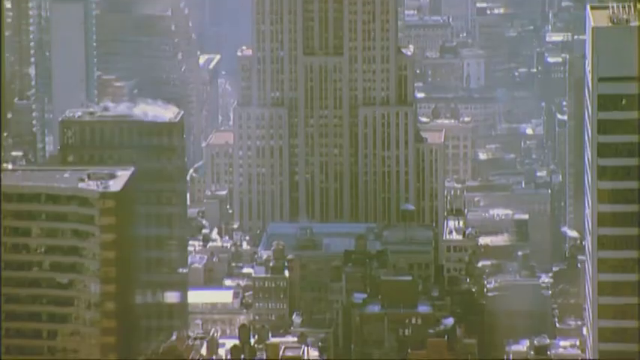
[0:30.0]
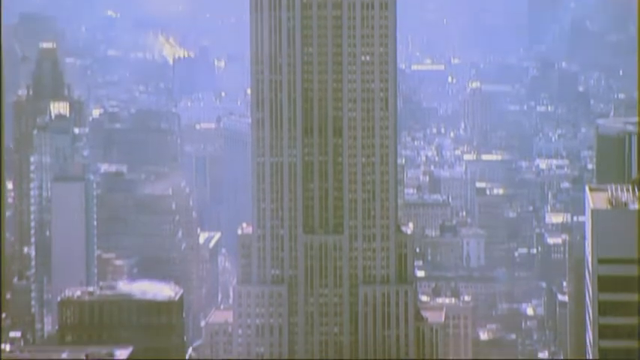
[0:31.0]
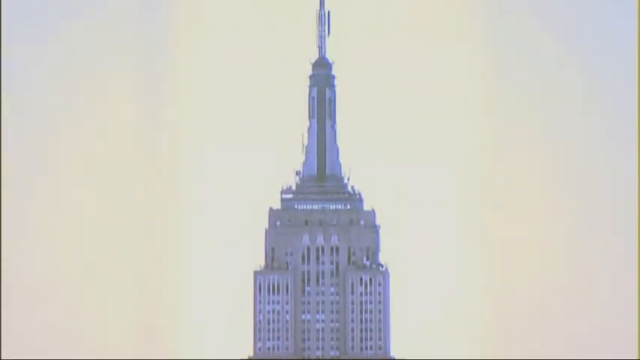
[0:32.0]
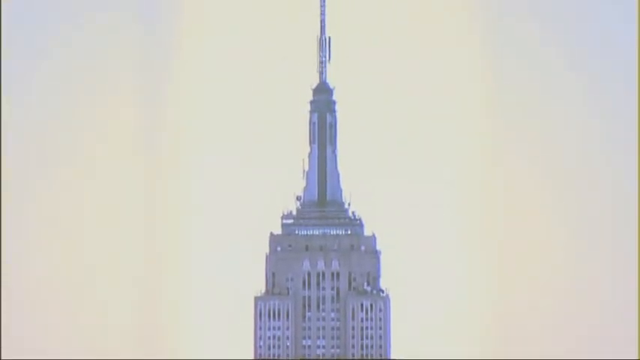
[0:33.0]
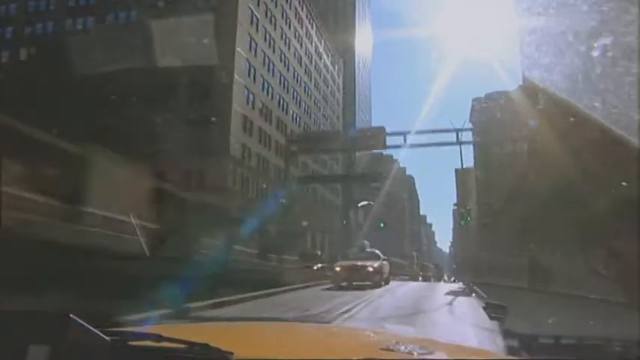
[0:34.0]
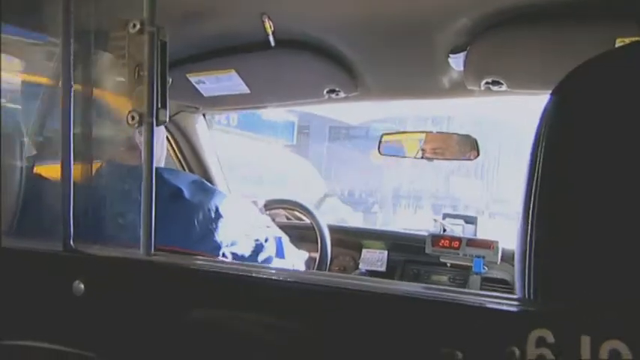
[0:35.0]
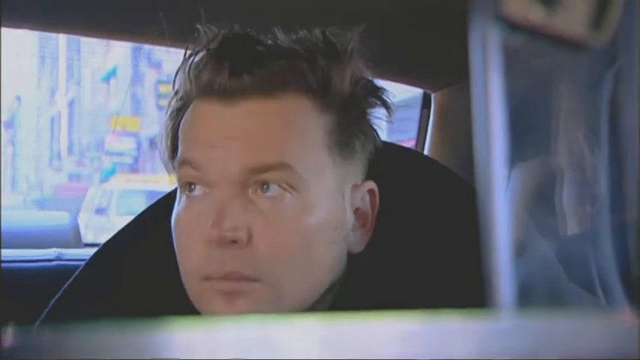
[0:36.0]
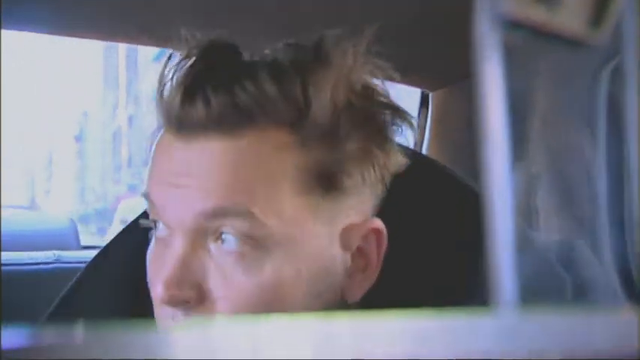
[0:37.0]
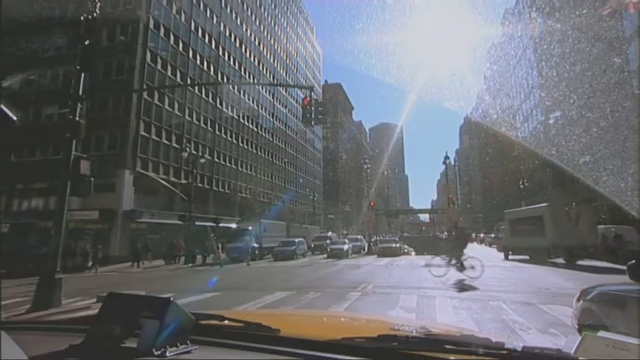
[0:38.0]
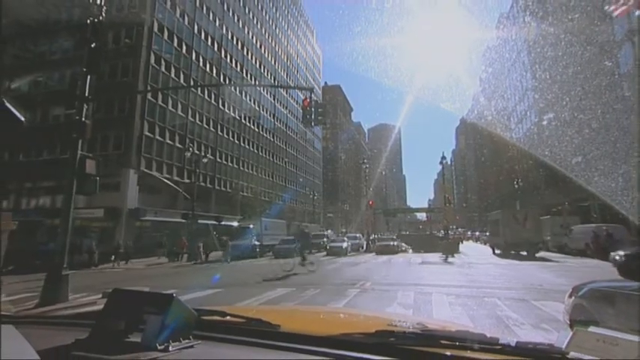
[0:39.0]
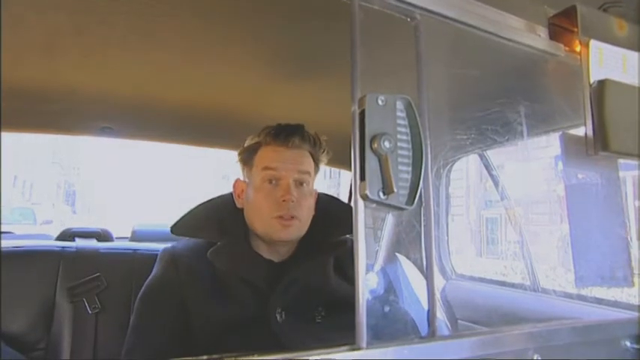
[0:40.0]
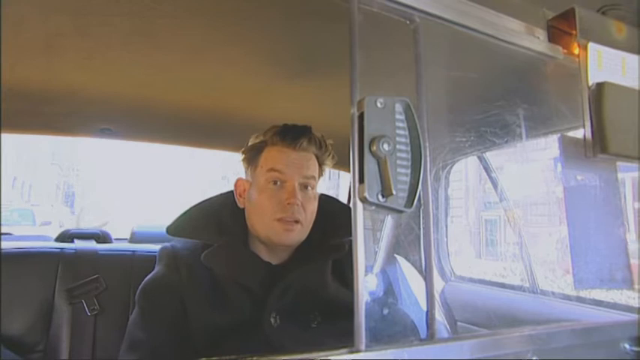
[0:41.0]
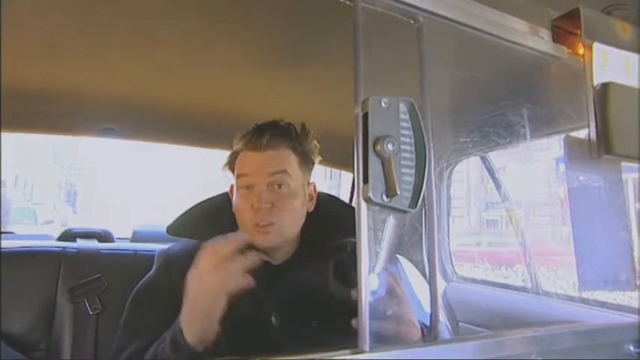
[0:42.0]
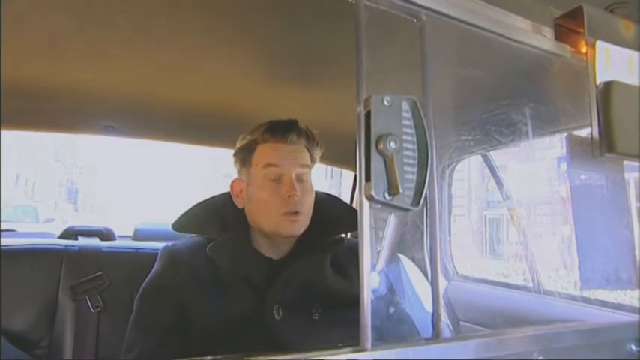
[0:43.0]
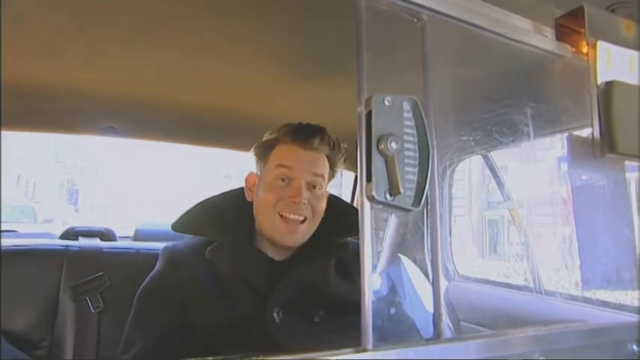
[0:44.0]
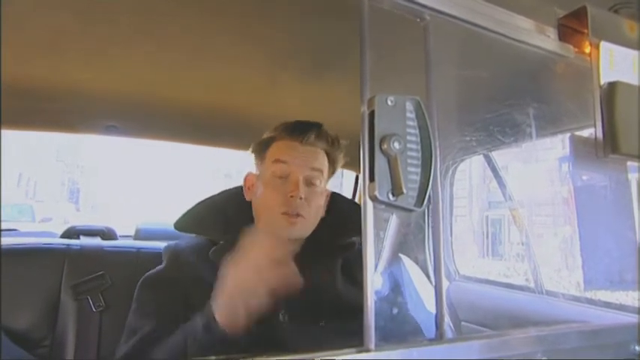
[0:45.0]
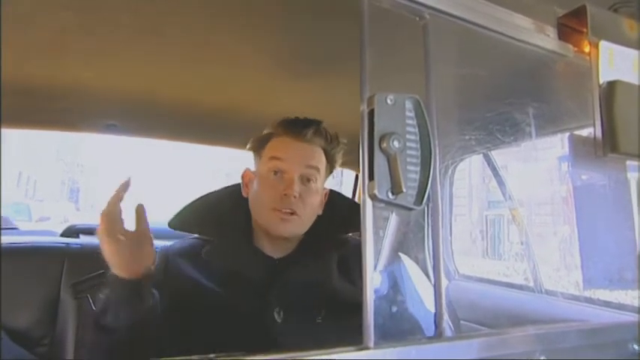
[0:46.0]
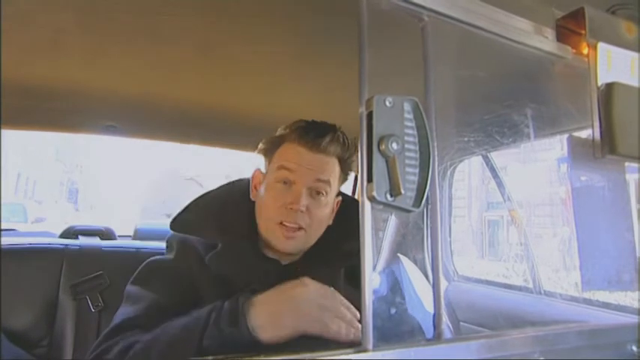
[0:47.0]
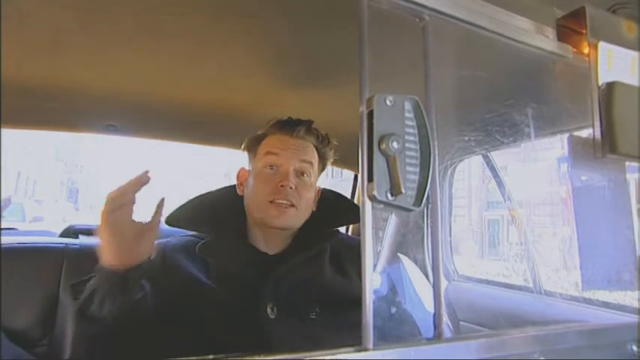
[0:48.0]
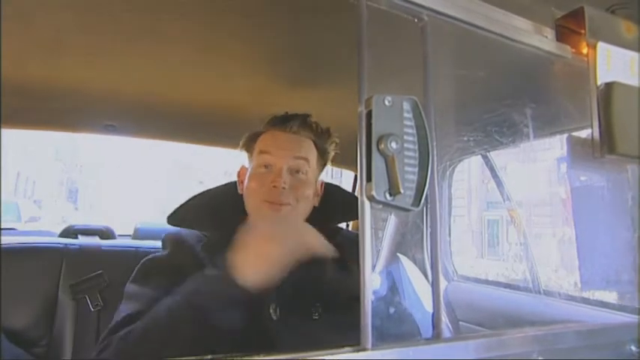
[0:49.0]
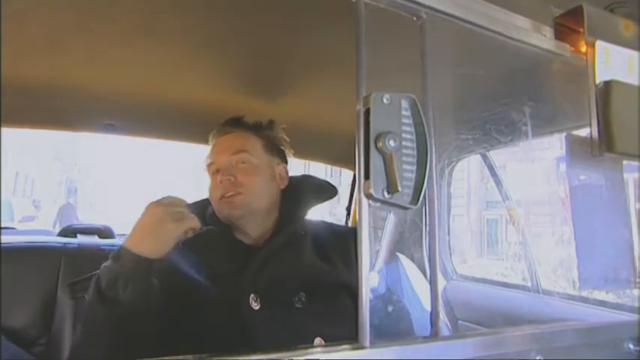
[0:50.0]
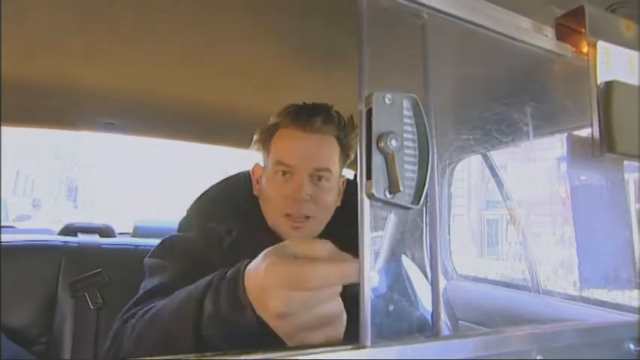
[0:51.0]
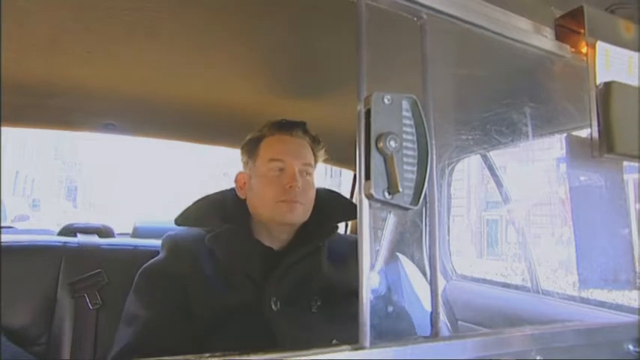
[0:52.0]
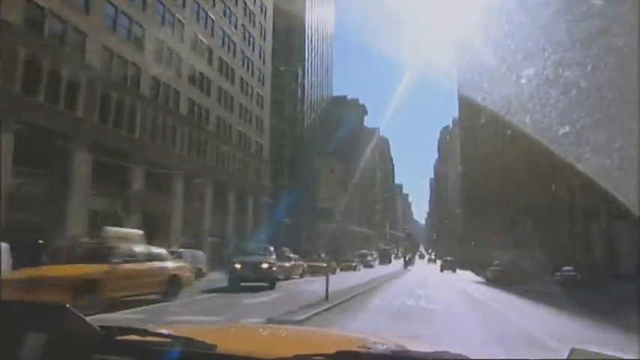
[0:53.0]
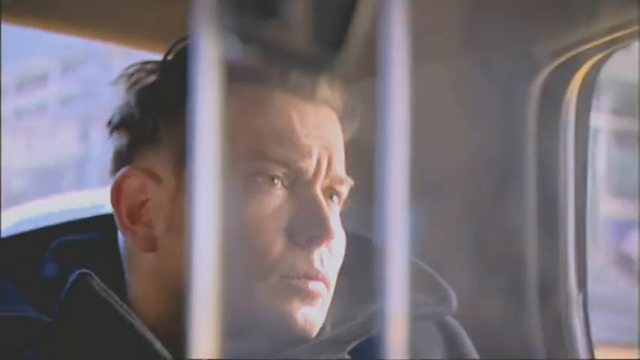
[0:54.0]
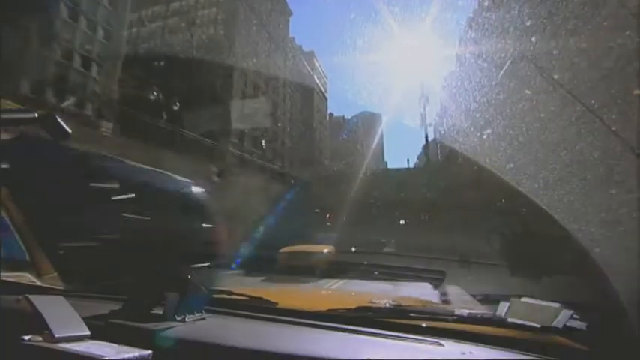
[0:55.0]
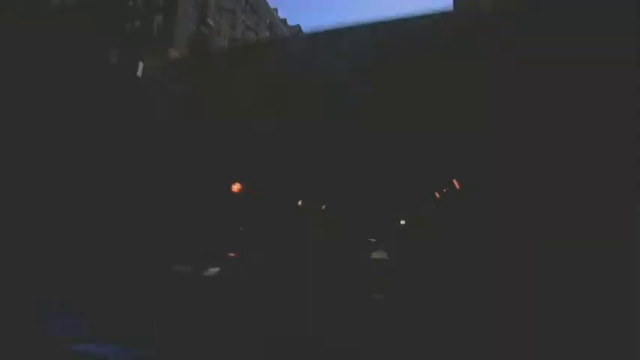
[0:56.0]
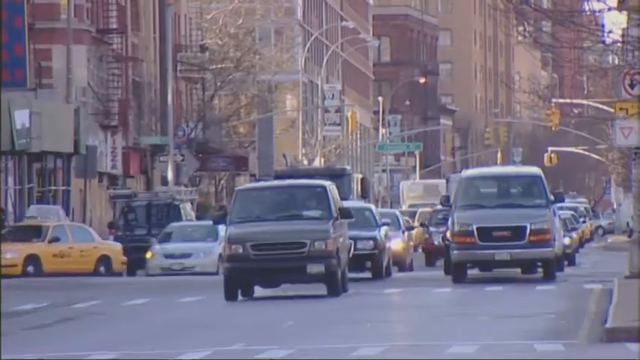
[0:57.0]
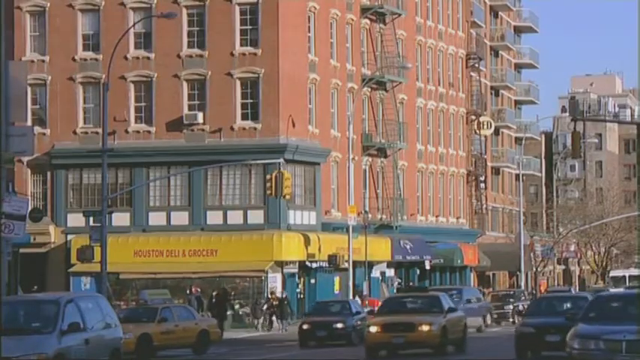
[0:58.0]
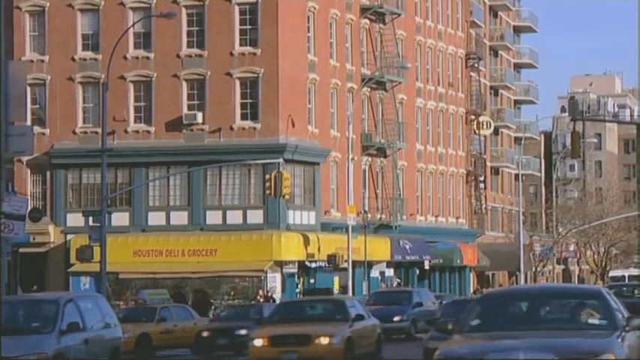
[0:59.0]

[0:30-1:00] The view of the Empire State Building is shown. The man has left the building and rides in the back of a taxi cab, pointing as the taxi moves quickly through traffic and under bridges. It reaches the area where the Houston Deli and Grocery and Katz's Deli are. The final shot is of the Empire State Building.